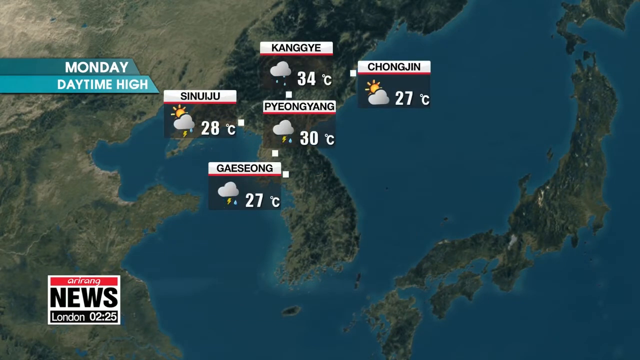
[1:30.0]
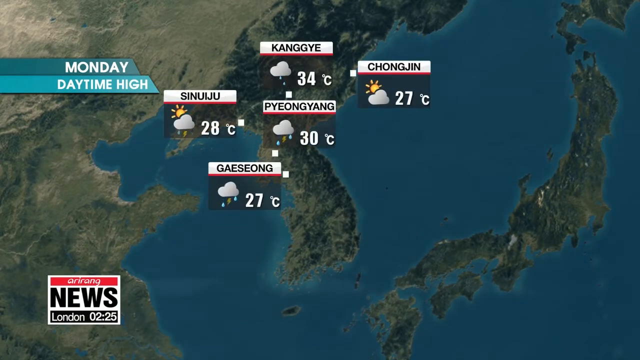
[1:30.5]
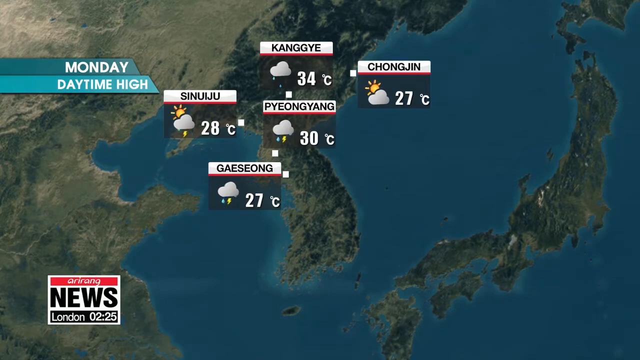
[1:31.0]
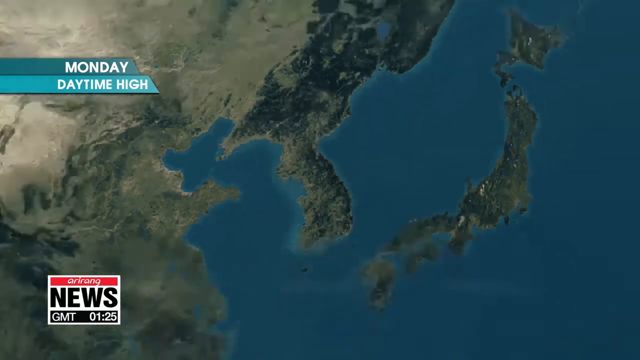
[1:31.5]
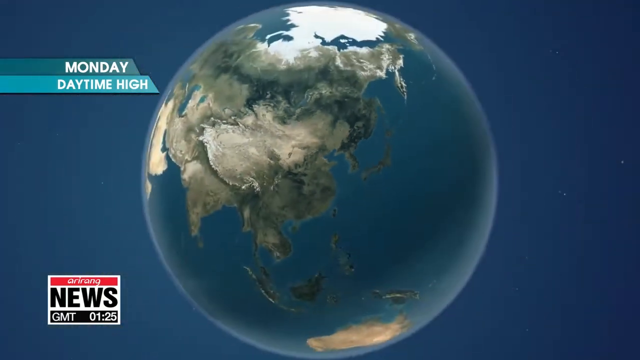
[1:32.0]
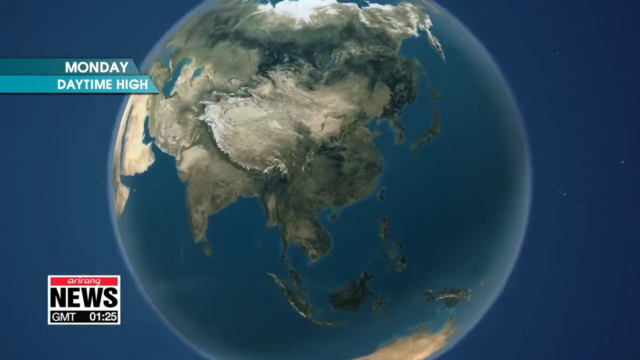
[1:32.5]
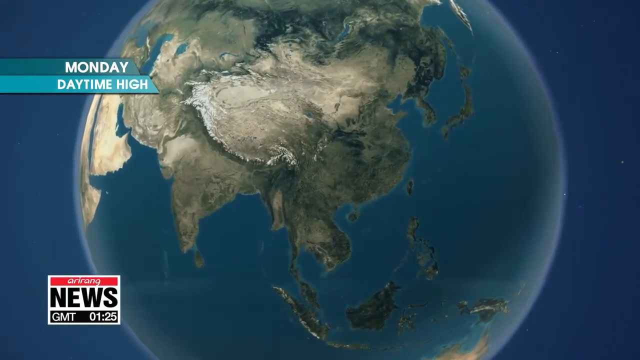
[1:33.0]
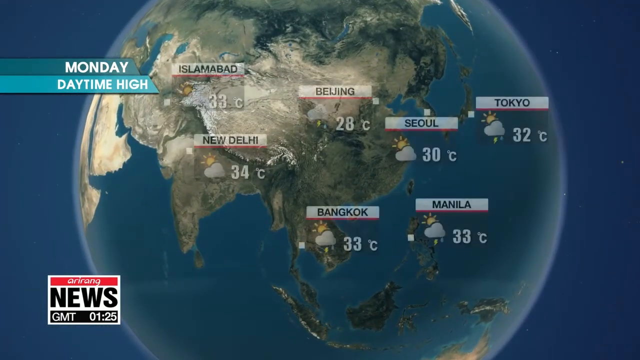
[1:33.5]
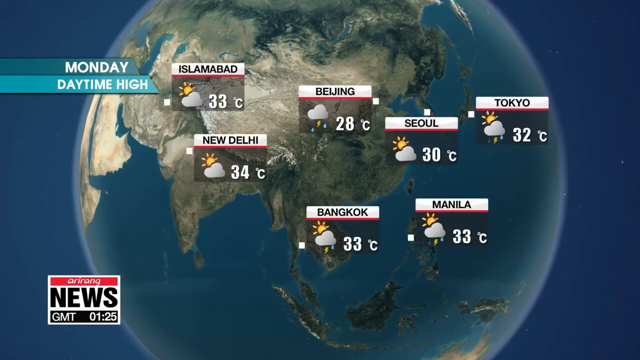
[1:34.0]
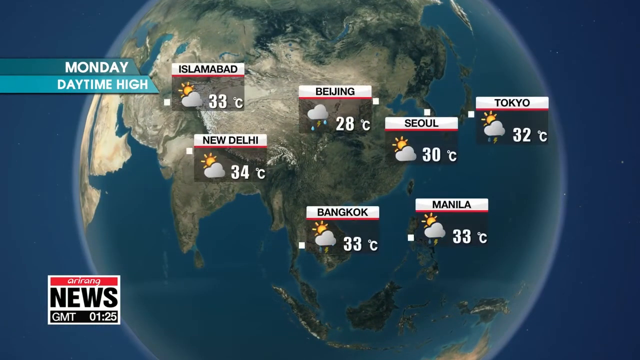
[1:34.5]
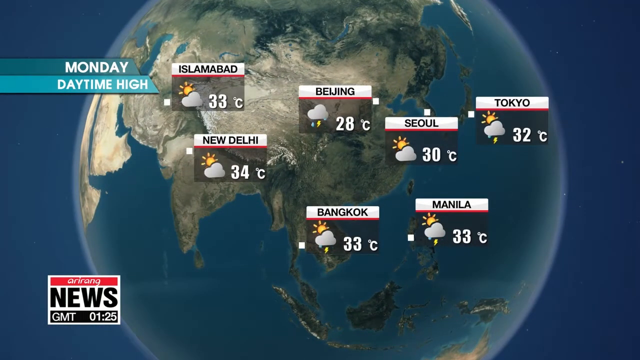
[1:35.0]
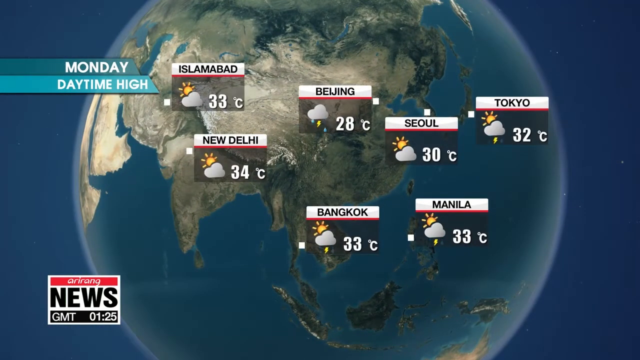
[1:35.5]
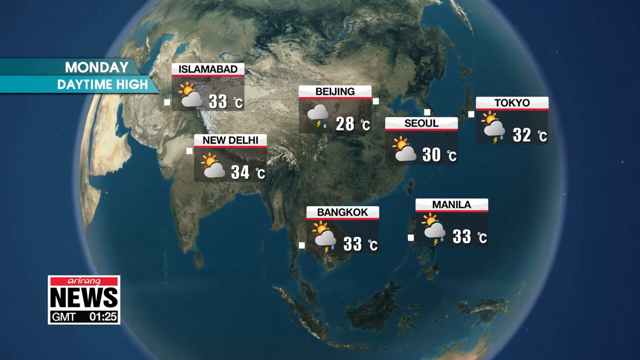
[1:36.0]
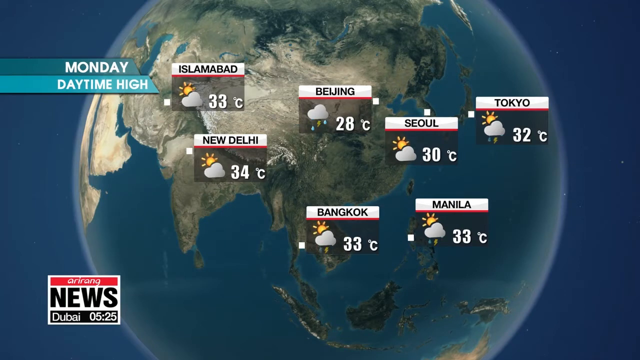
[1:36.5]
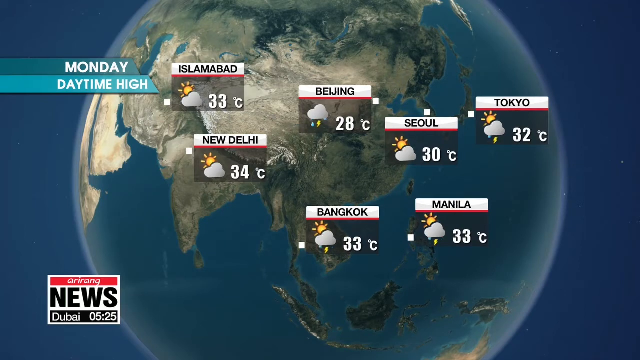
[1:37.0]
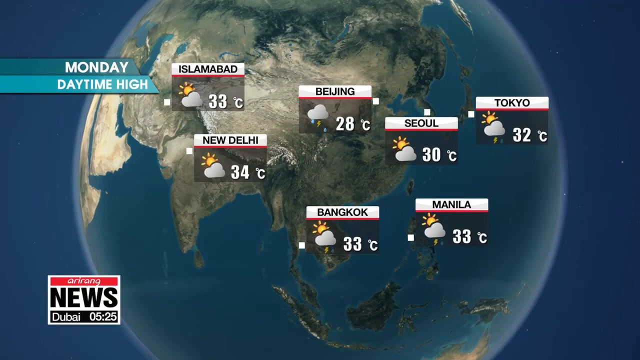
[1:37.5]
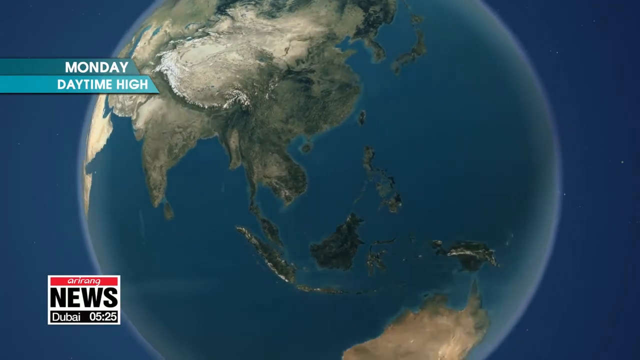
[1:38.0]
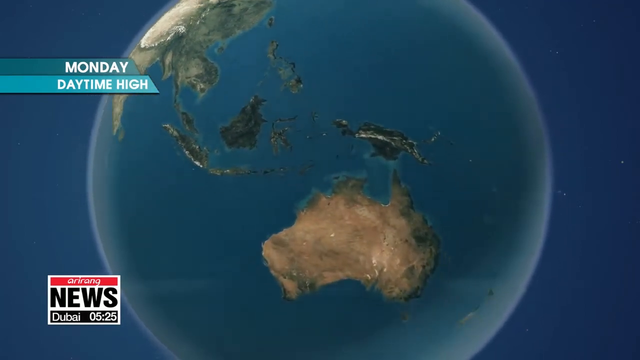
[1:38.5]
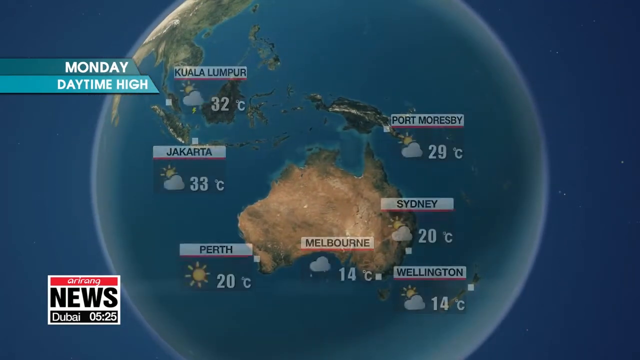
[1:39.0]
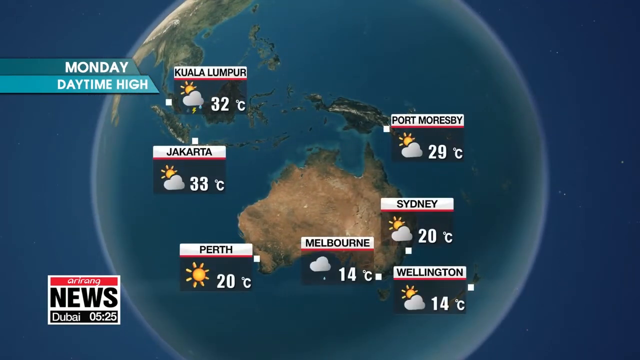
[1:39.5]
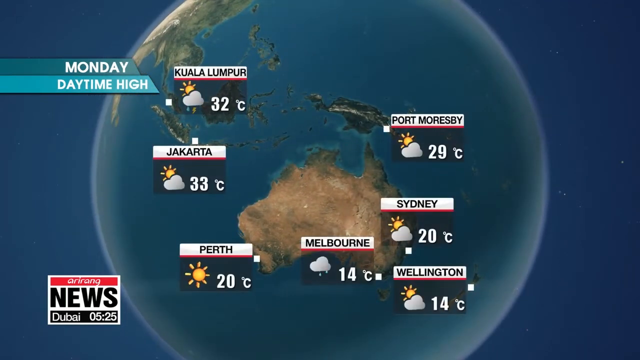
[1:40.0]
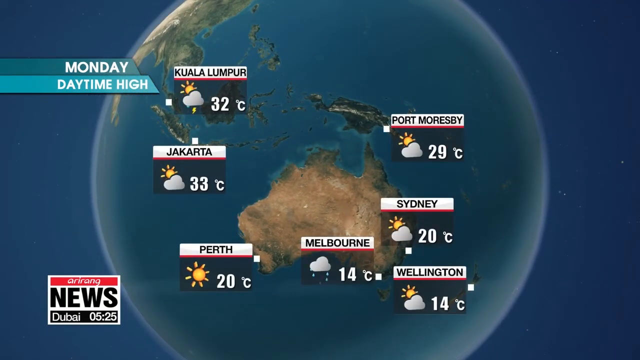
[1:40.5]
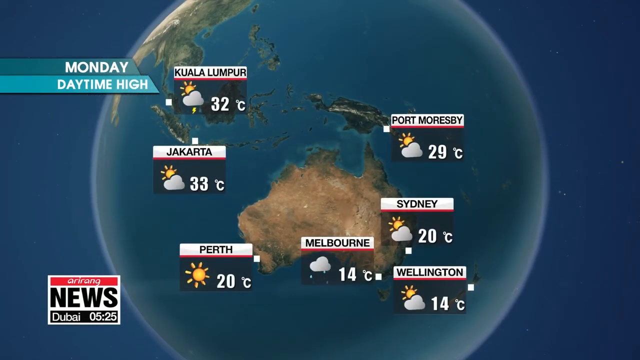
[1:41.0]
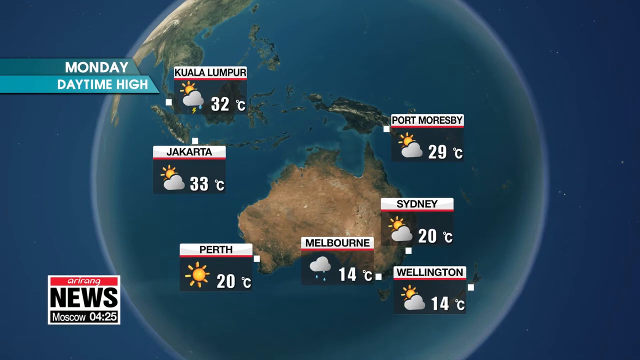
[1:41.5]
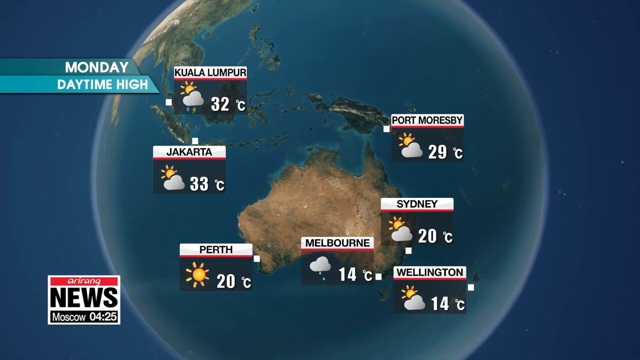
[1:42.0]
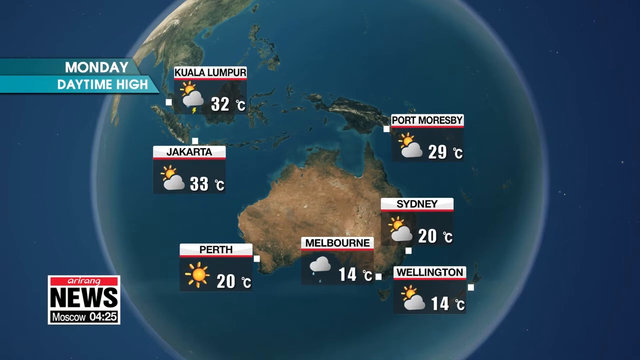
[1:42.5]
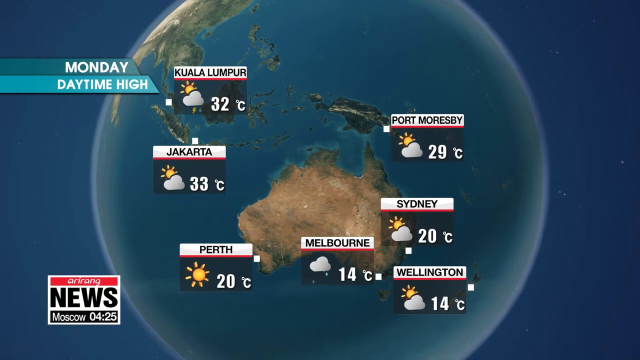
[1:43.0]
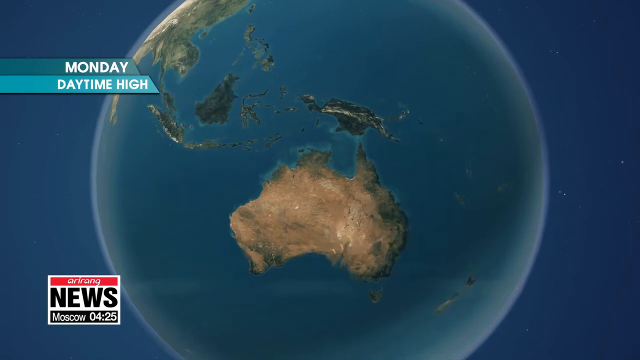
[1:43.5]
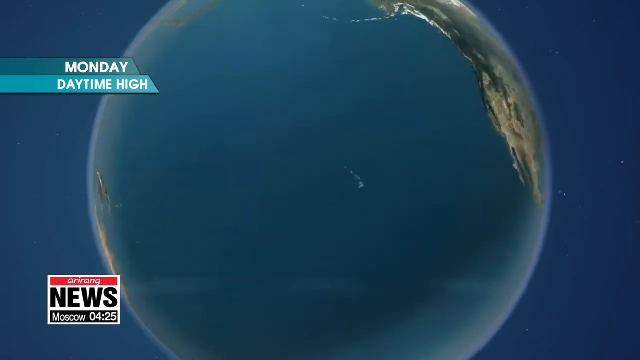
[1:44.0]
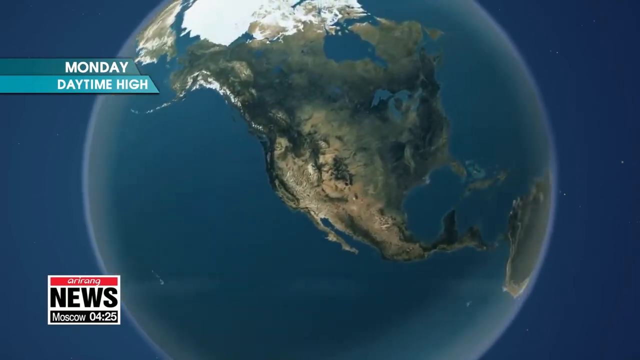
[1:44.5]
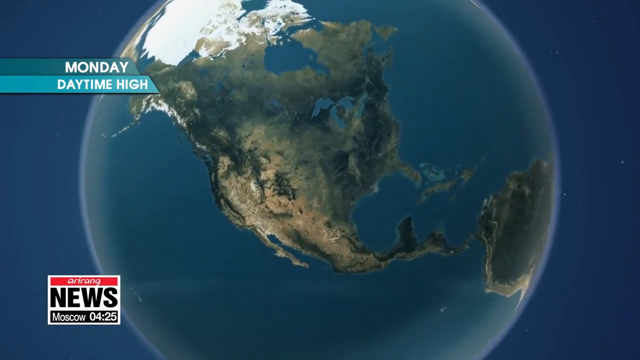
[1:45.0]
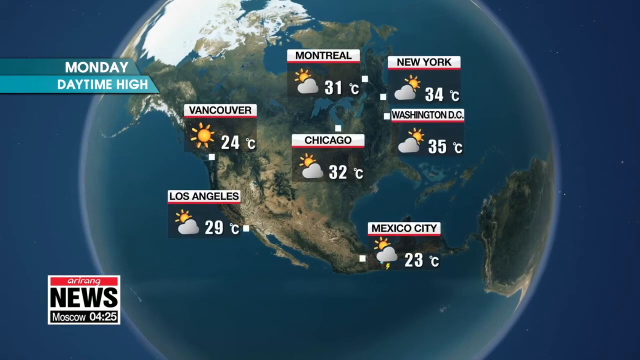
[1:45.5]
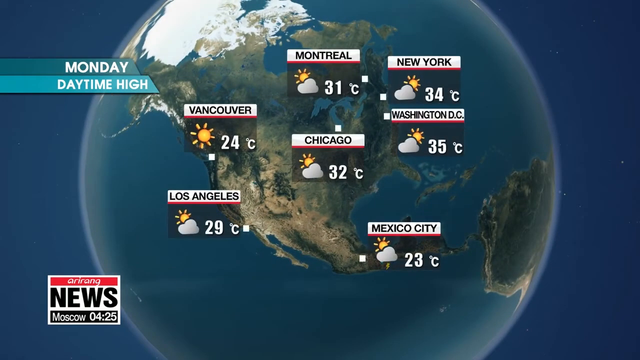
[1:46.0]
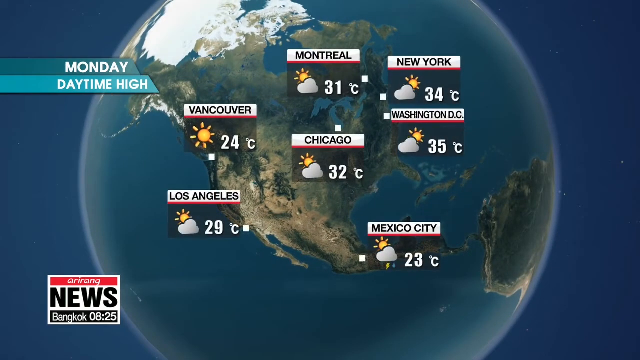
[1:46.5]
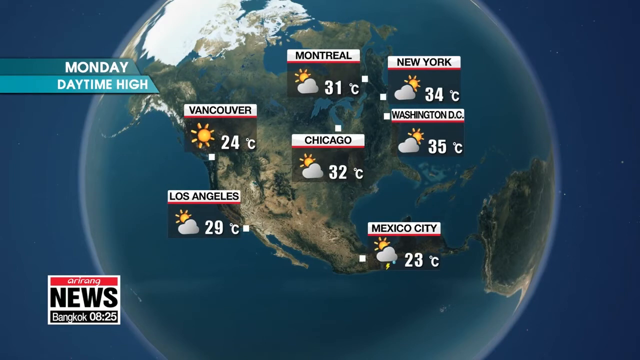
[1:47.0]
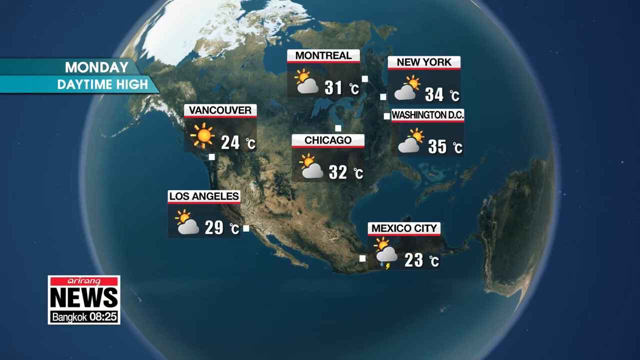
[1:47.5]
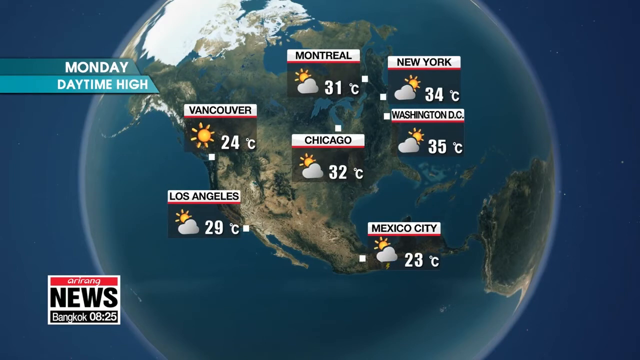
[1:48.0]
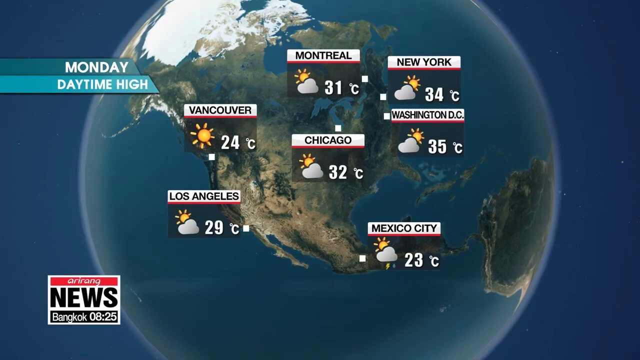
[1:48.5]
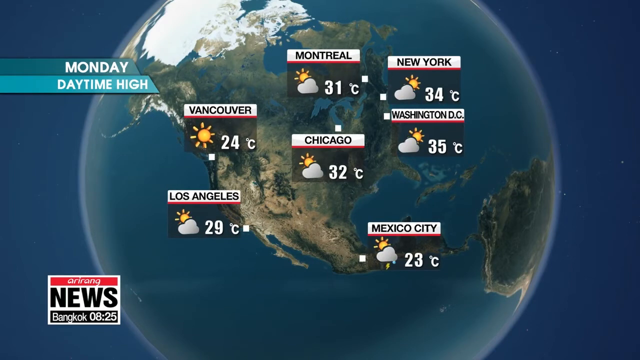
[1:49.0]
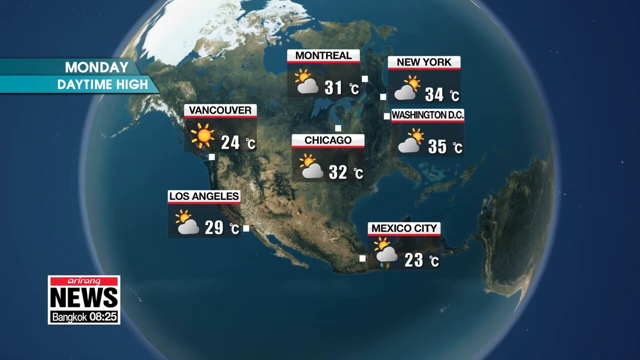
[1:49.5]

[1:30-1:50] A representation of the Earth loops through different temperatures for cities around the world: Tokyo is expected to reach 32 degrees Celsius, Beijing 28 degrees Celsius, and New Delhi 34 degrees. A news logo in the bottom left corner of the screen identifies this as a news channel. The view shifts to Australia, highlighting some cities with their expected weather: Sydney at 20 degrees, Wellington at 14 degrees Celsius, and Perth at 20 degrees Celsius. The globe then shifts to the United States and shows different cities: New York at 34 degrees Celsius, Washington DC at 35 degrees Celsius, Los Angeles at 29 degrees Celsius, Vancouver at 24 degrees Celsius, and Mexico City at 23 degrees Celsius.